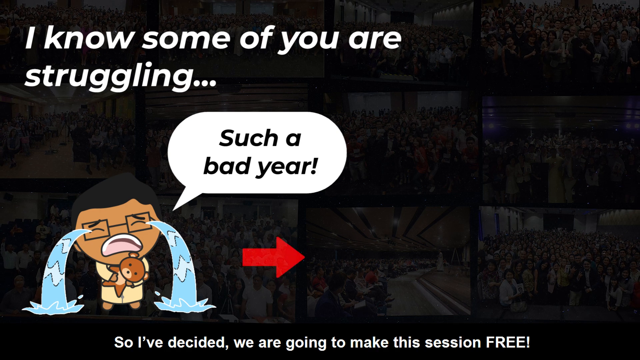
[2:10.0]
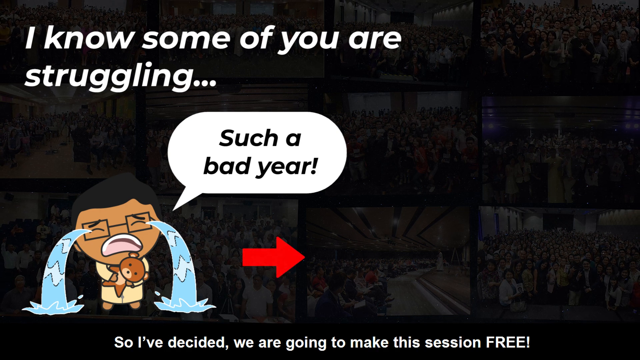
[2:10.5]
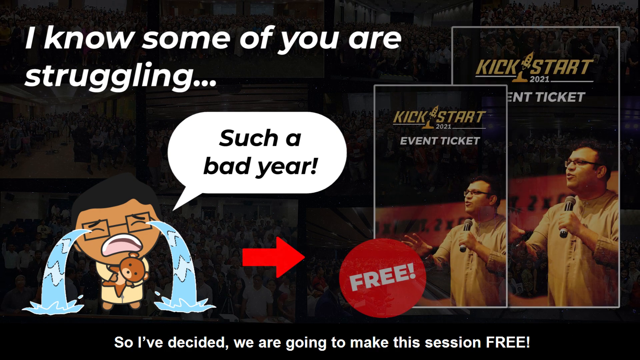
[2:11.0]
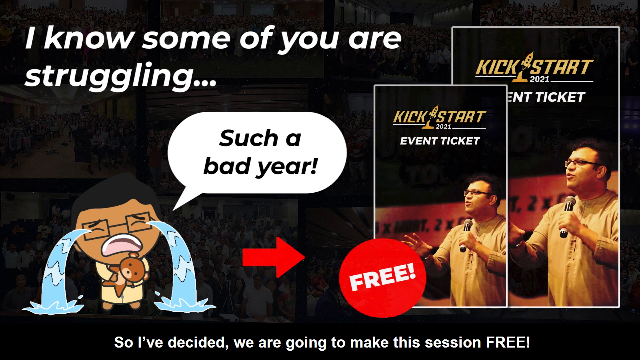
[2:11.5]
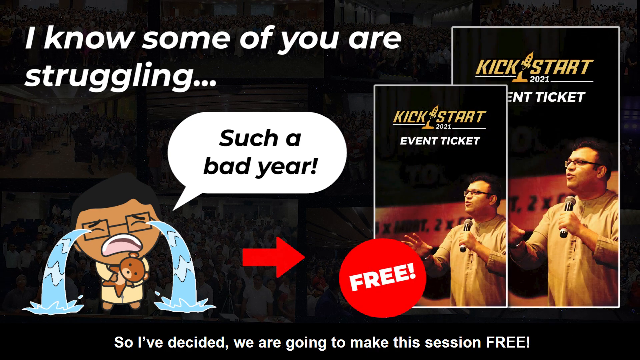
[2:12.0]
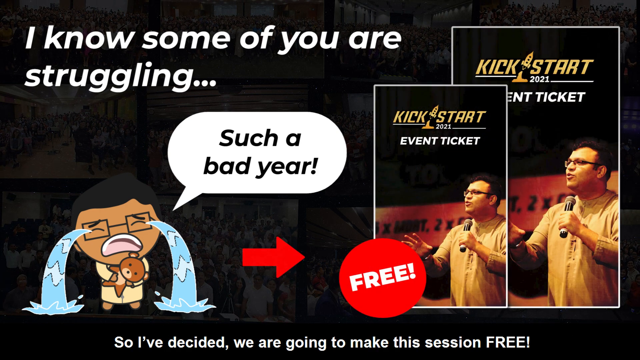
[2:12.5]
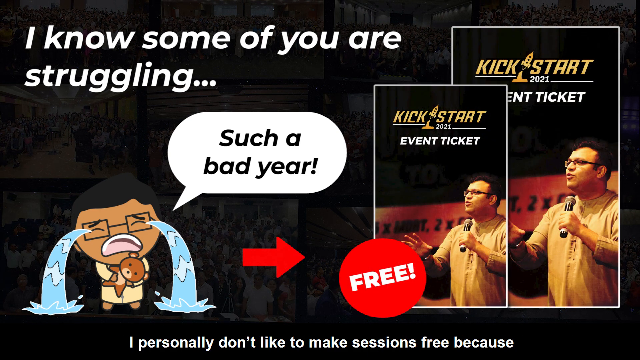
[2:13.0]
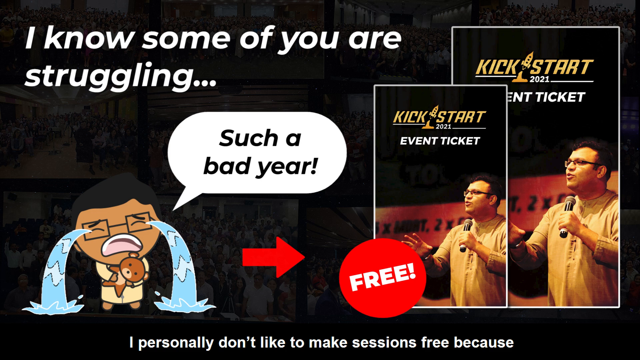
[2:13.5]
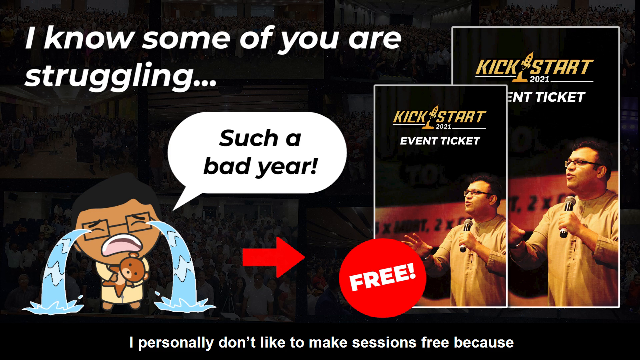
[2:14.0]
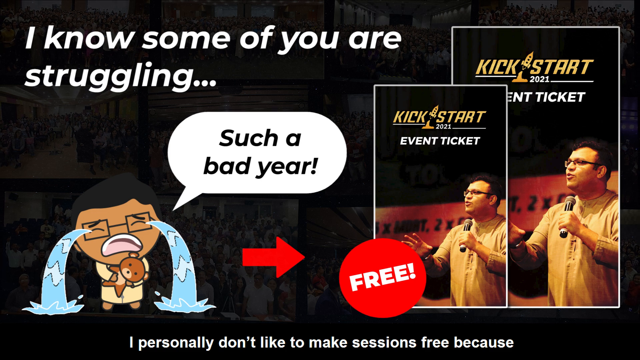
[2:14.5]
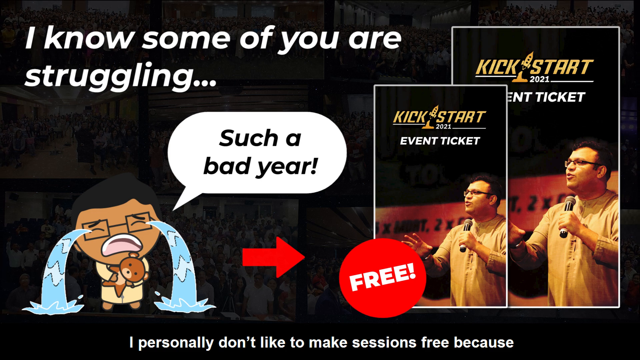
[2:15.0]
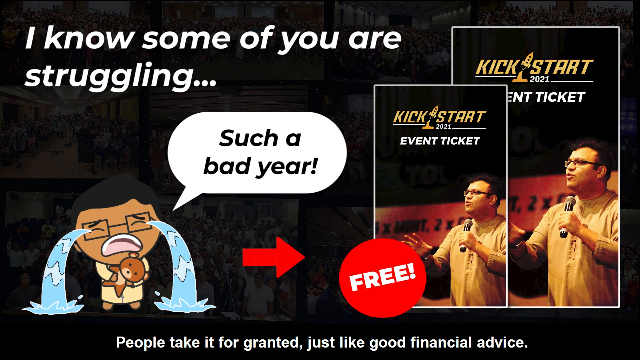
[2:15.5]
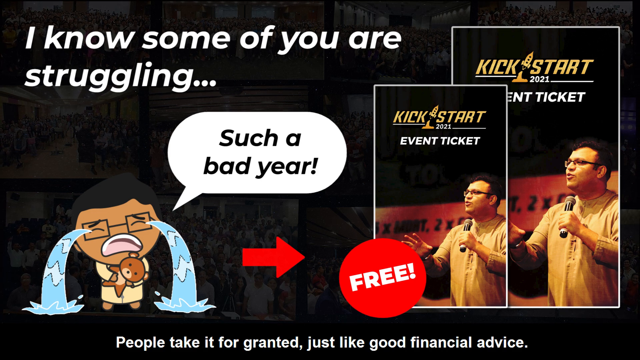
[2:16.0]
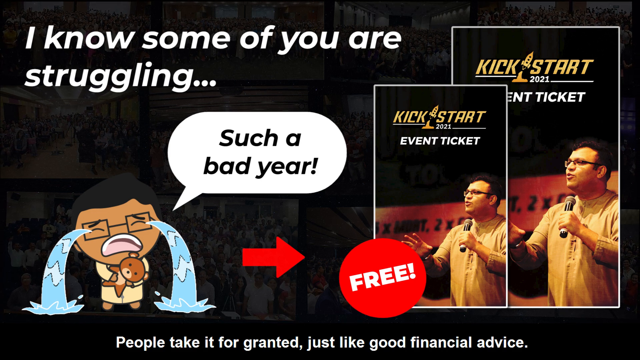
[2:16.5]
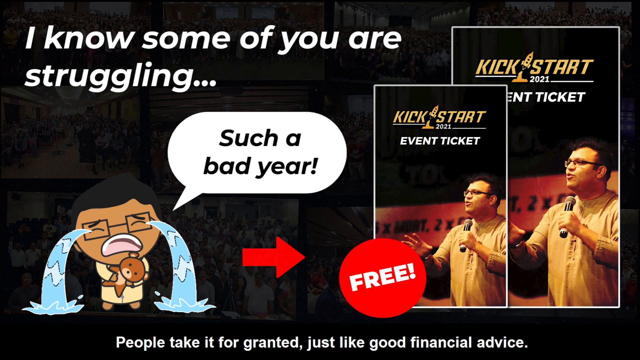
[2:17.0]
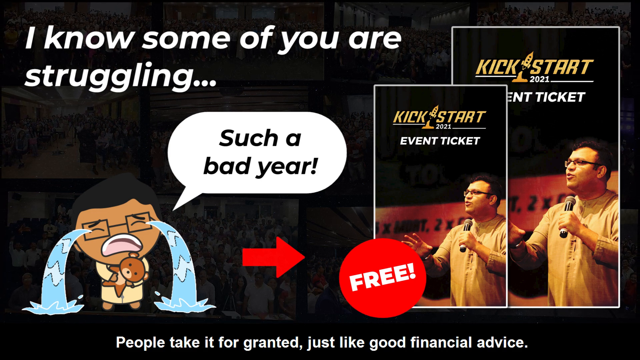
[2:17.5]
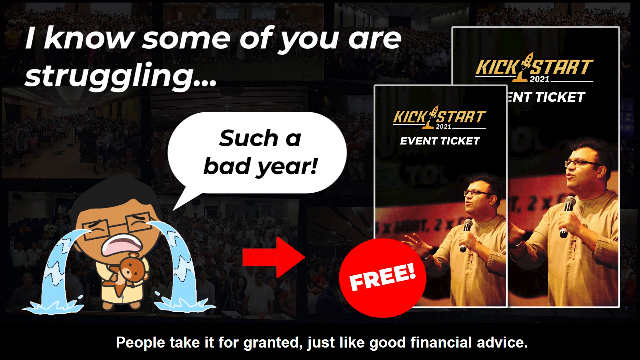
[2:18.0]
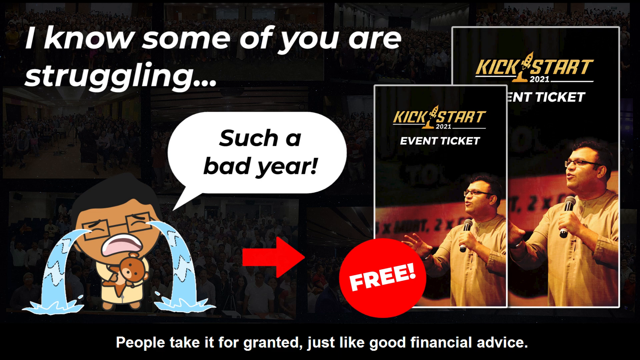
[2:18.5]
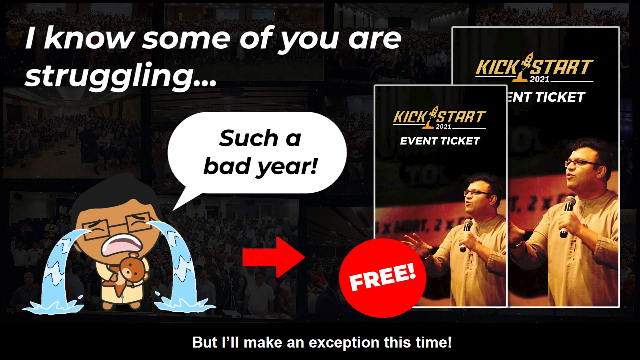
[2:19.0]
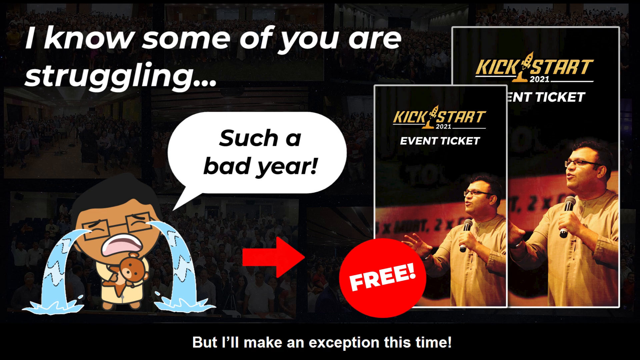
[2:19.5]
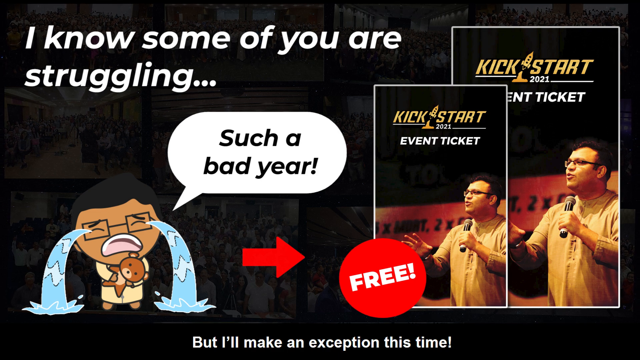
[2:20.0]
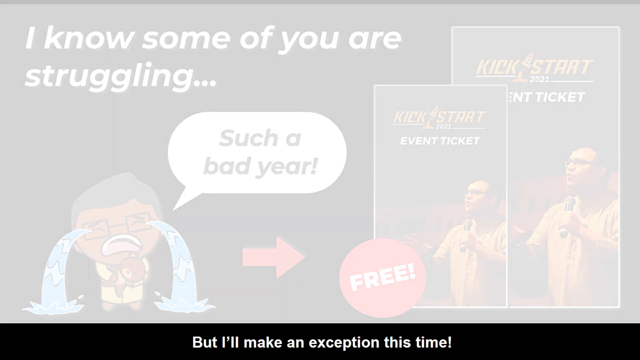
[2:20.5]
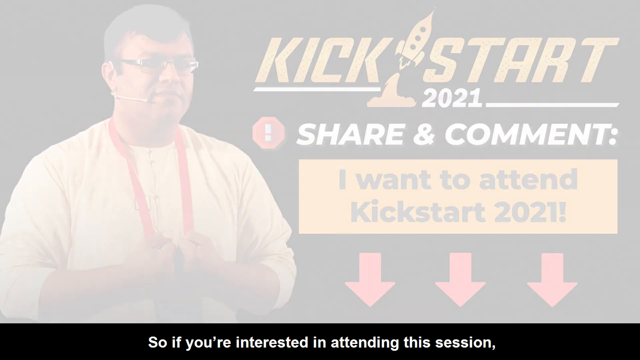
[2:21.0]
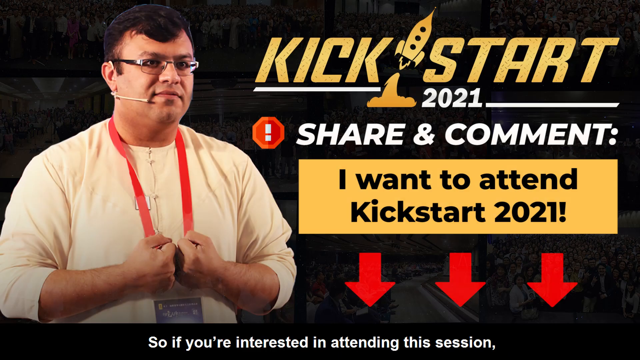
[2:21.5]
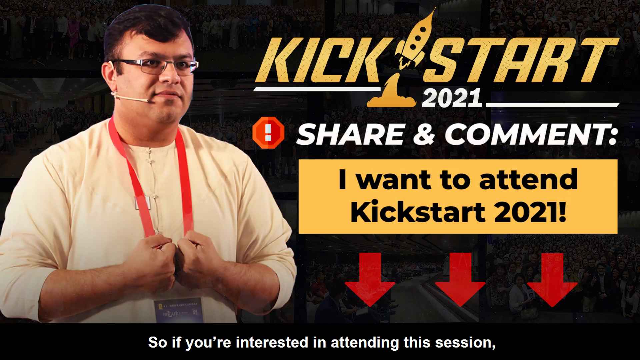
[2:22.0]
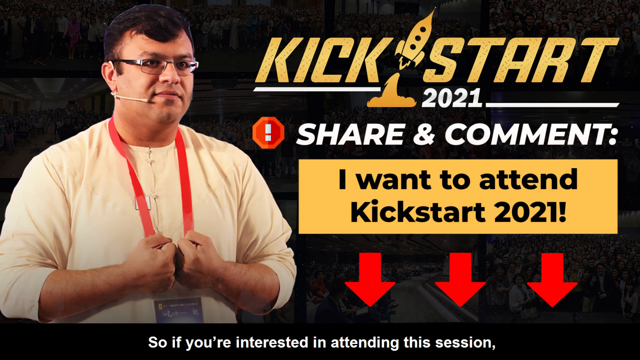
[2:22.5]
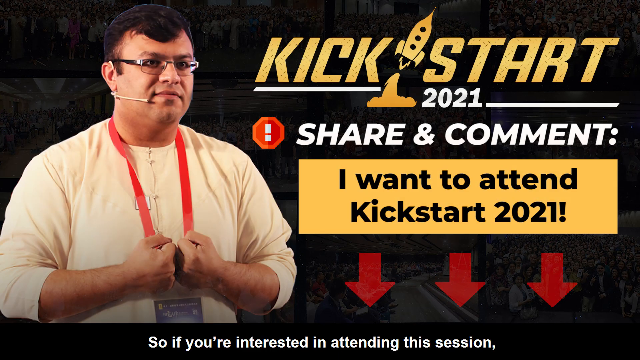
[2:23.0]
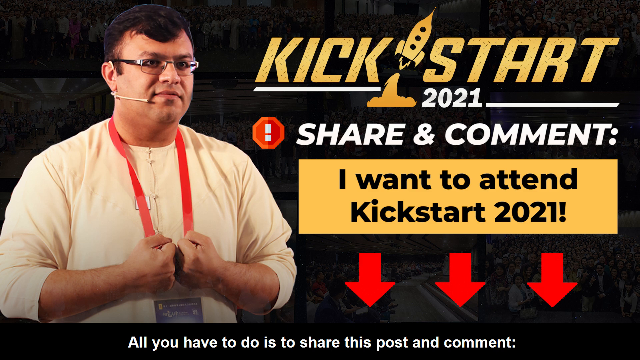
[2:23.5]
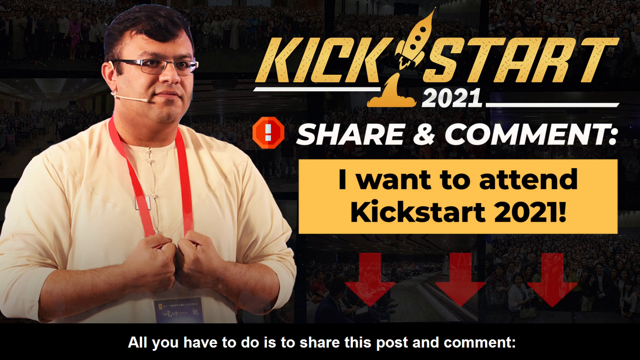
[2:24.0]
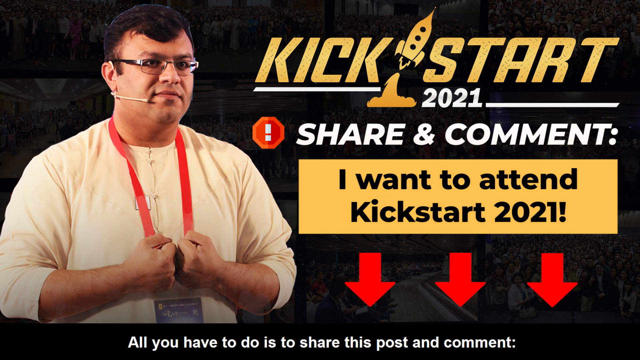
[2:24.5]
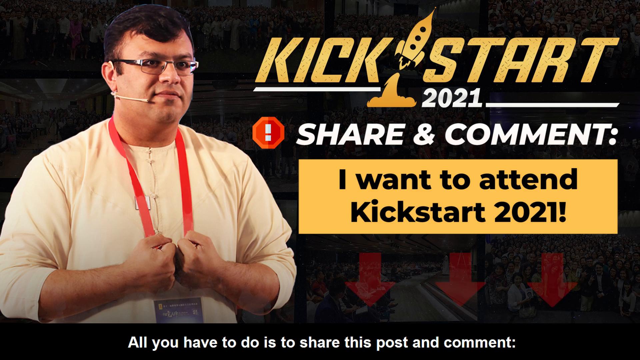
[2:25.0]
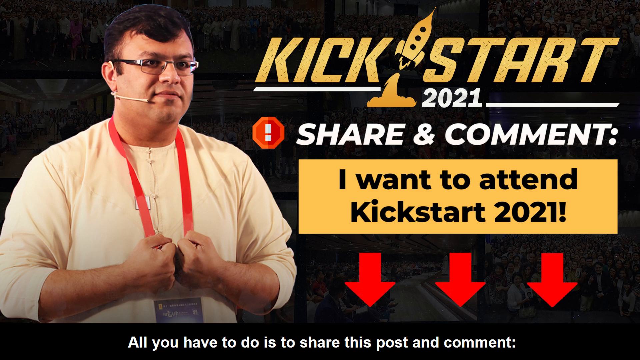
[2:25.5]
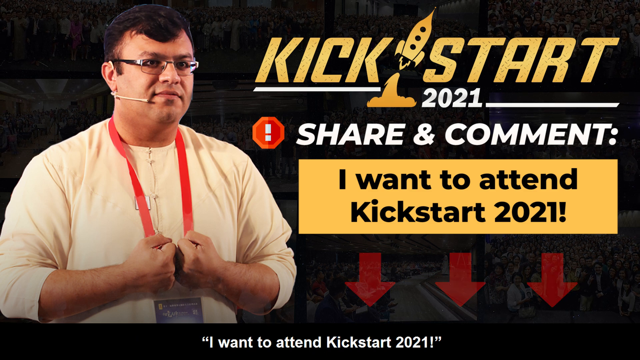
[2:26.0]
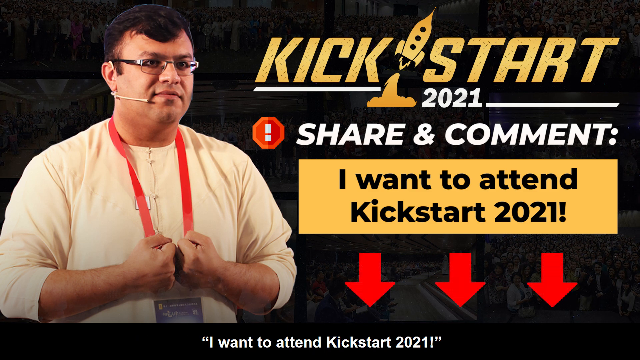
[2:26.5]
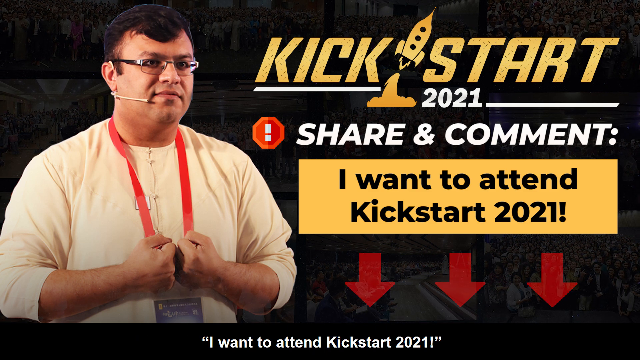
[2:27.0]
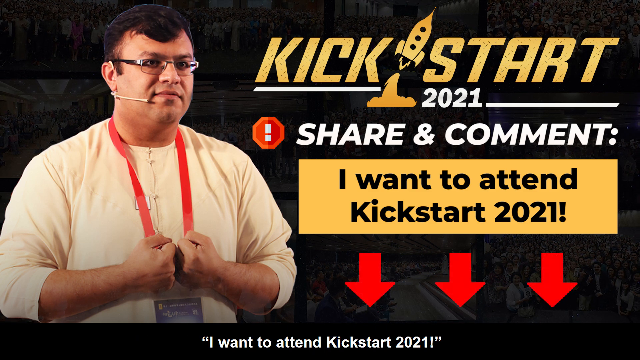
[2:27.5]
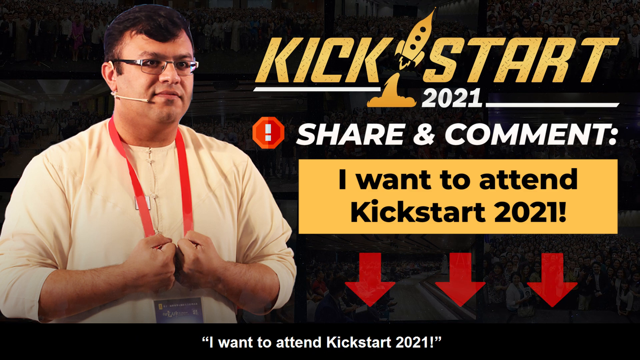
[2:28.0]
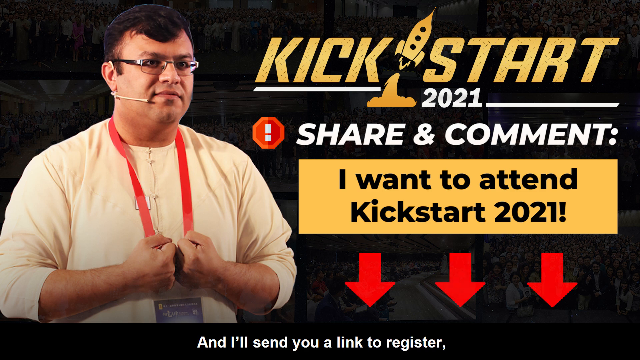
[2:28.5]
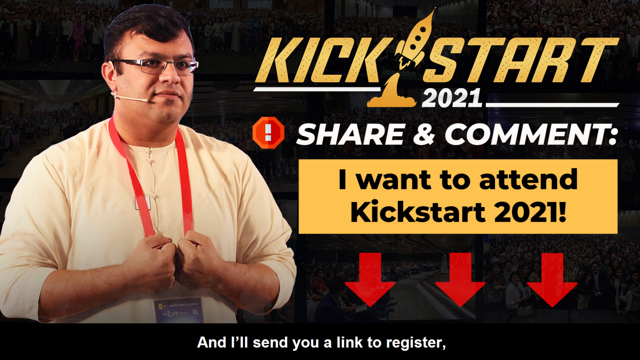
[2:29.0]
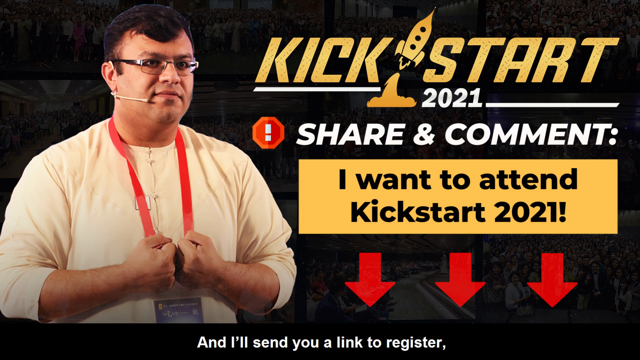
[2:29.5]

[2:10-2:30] The image shows a small child wearing glasses, mouth open, holding a teddy bear and crying. The title reads "I know some of you are struggling," and a thought bubble from the image says "such a bad year." A red arrow brings up two identical pictures labeled "kickstart 2021 event ticket," with a red circle that says "free" inside it; one picture is smaller than the other. The picture is of the man with glasses seen earlier, now holding a microphone in his left hand with his right hand up, appearing to be mid-speech. The next screen shows the same man standing with his fists together, wearing glasses and a microphone by the right side of his face. The caption reads "Kickstart 2021, share and comment." A yellow box says "I want to attend Kickstart 2021," and three red arrows below it point down and start to blink.